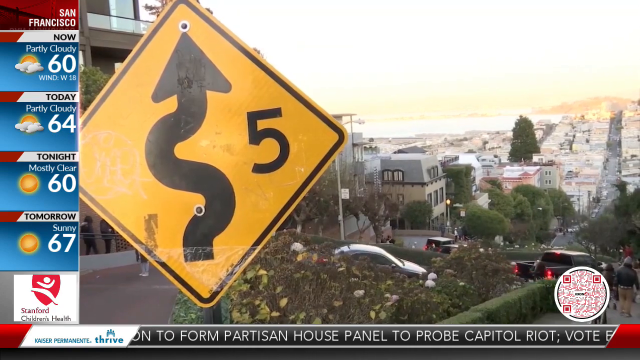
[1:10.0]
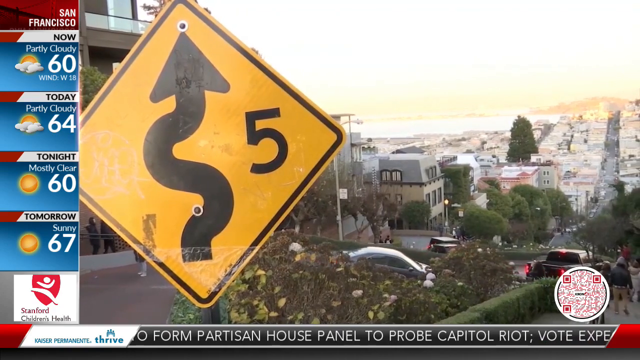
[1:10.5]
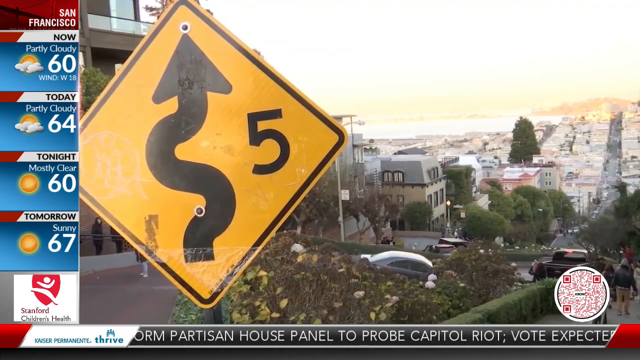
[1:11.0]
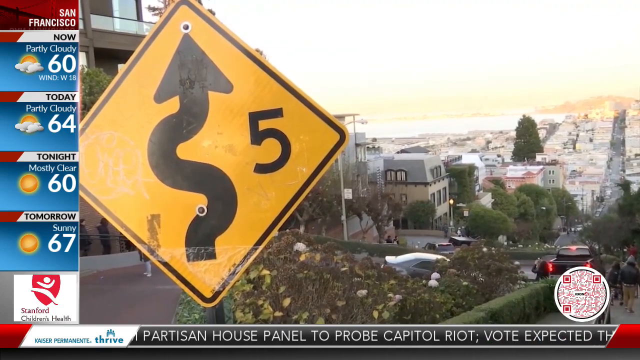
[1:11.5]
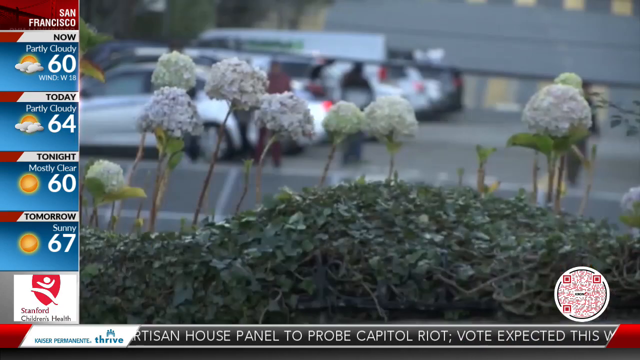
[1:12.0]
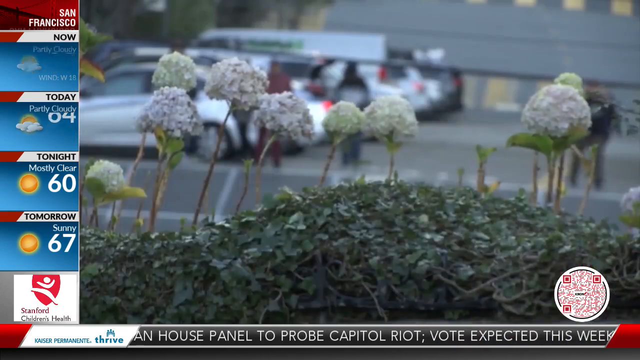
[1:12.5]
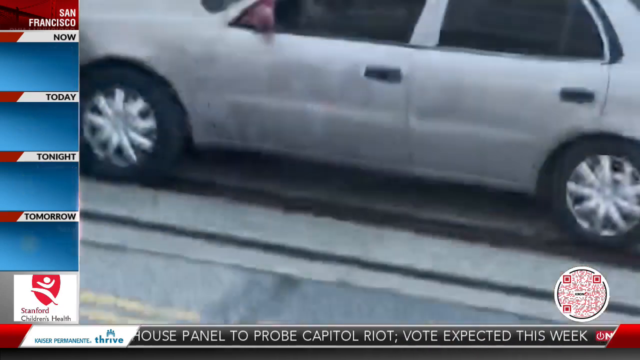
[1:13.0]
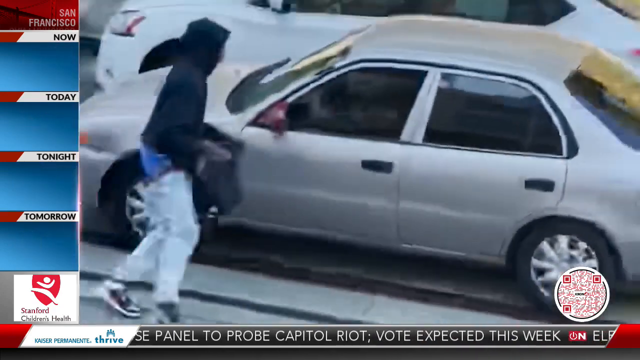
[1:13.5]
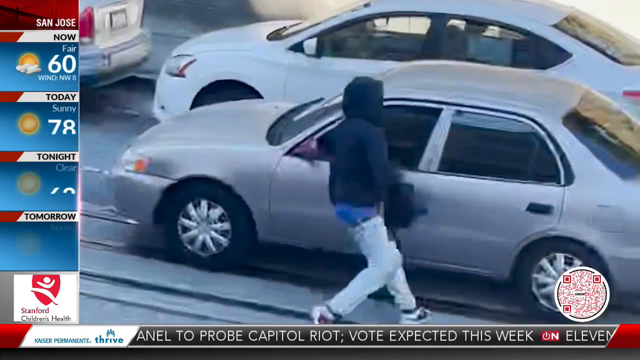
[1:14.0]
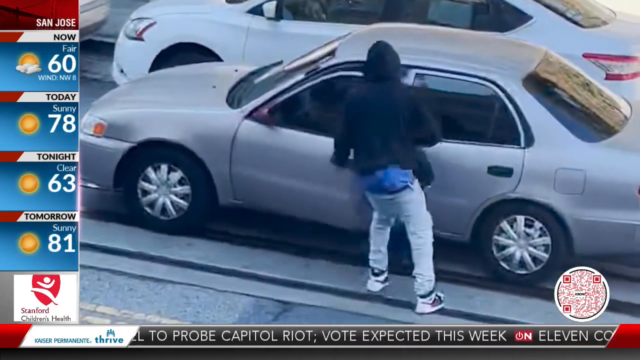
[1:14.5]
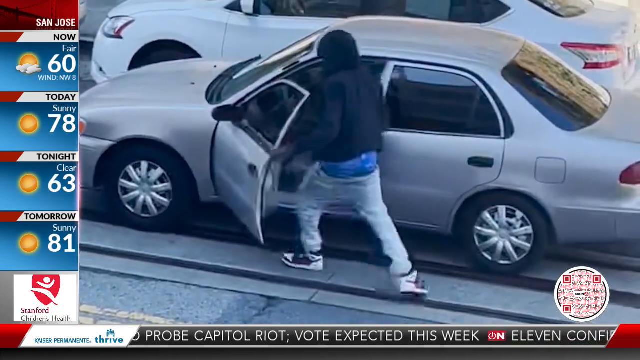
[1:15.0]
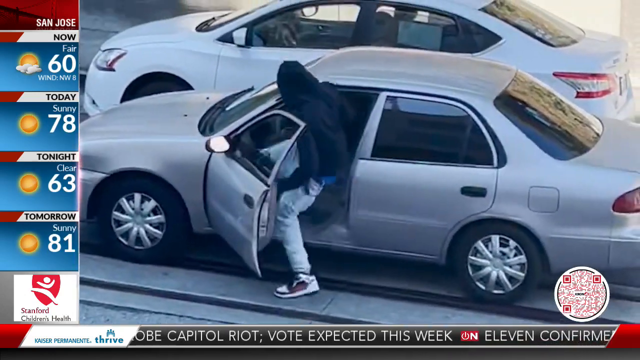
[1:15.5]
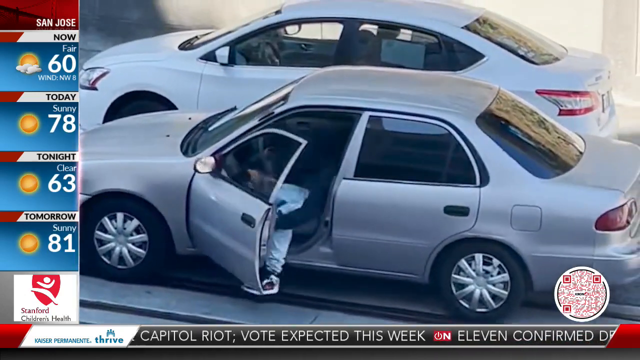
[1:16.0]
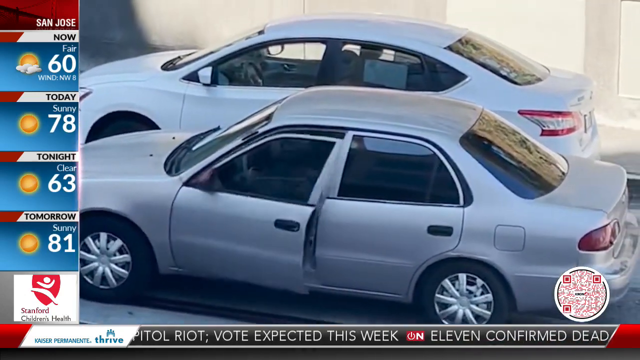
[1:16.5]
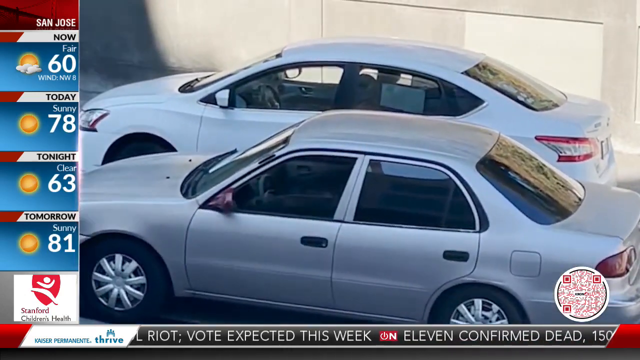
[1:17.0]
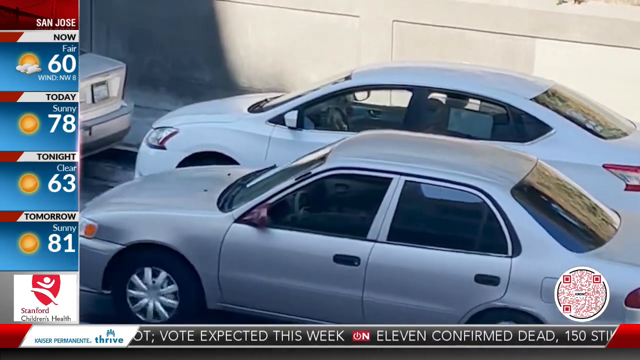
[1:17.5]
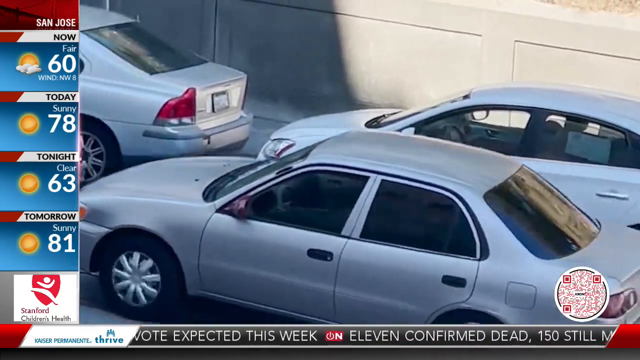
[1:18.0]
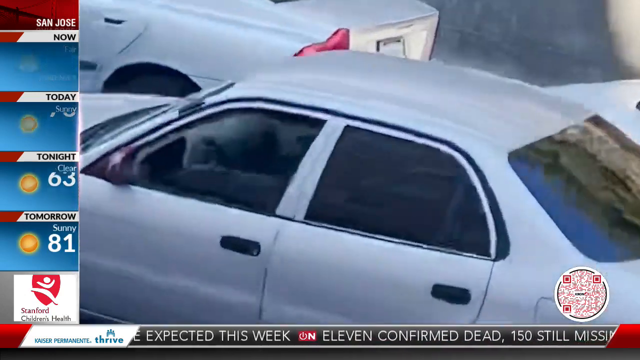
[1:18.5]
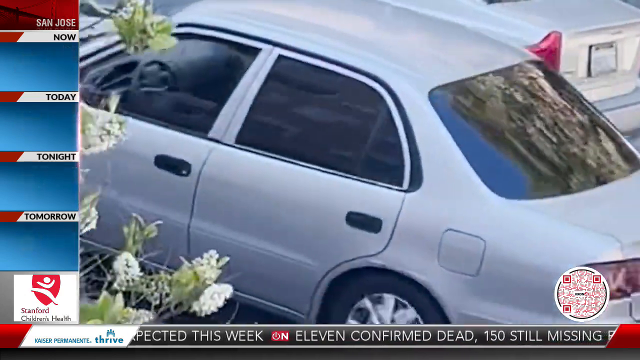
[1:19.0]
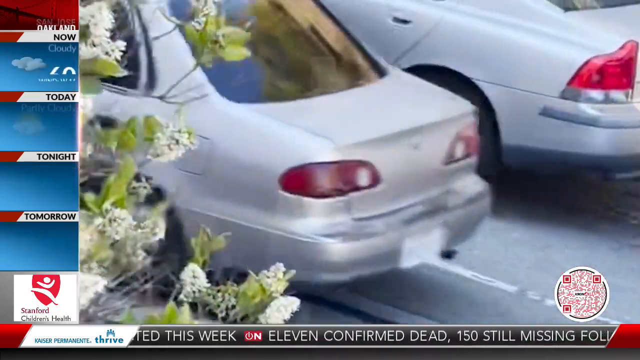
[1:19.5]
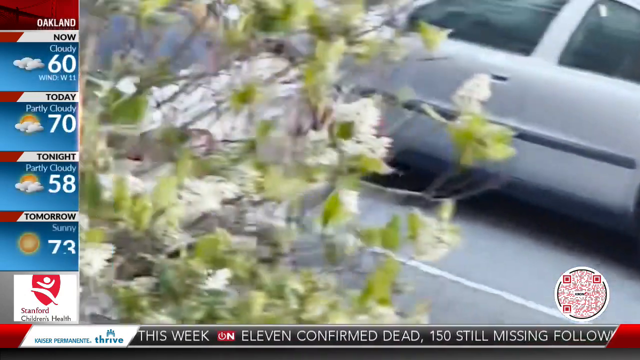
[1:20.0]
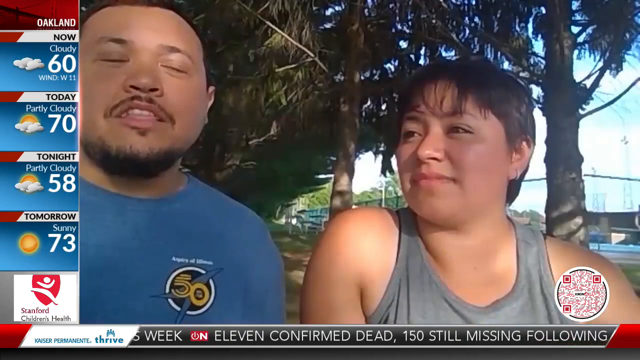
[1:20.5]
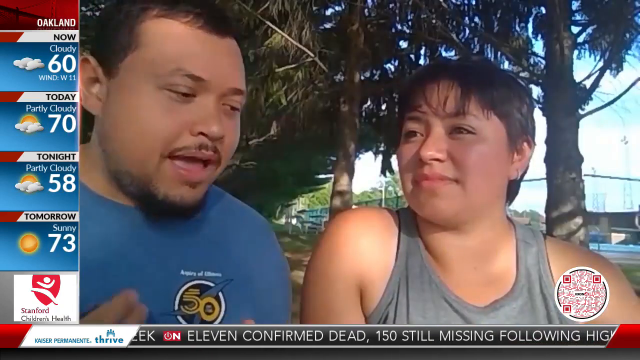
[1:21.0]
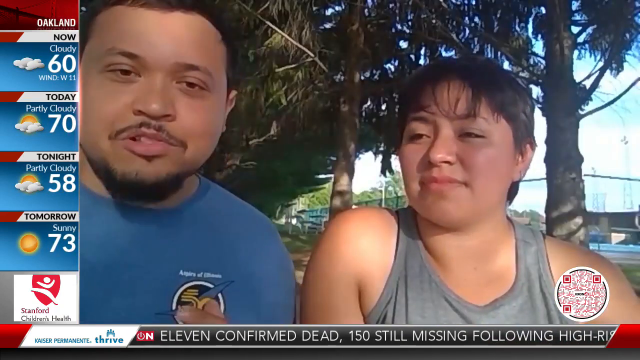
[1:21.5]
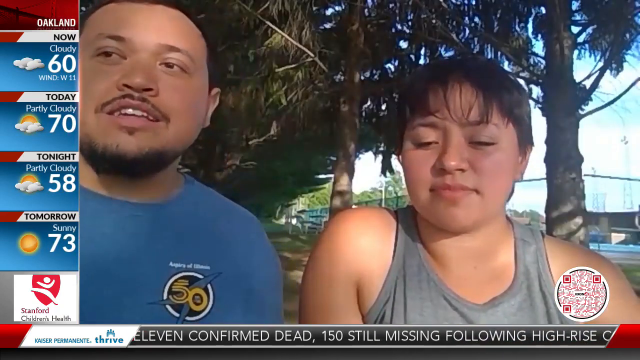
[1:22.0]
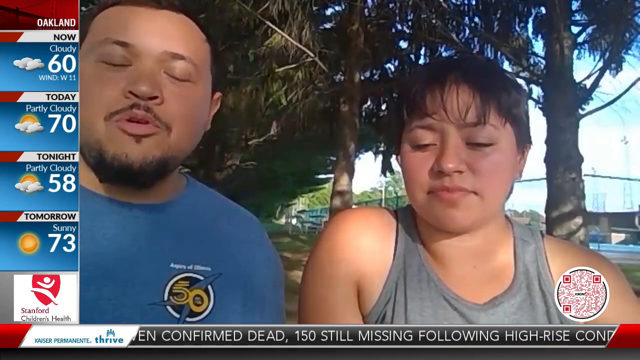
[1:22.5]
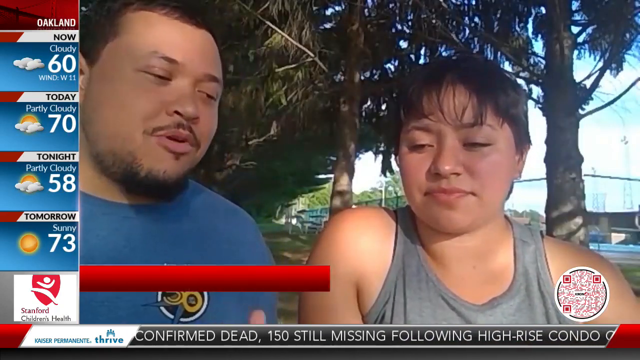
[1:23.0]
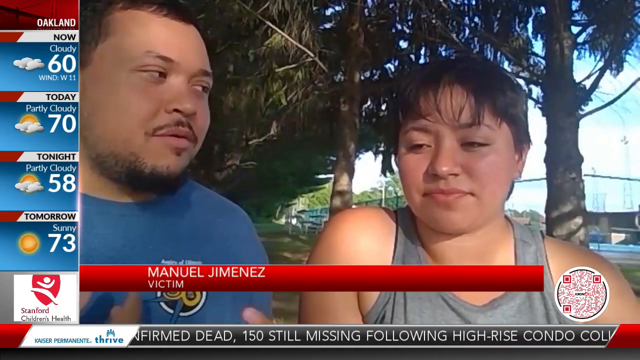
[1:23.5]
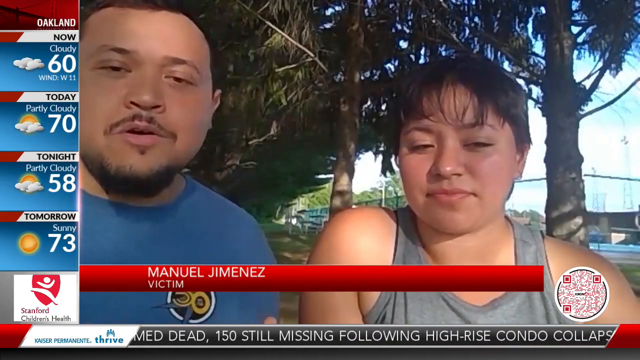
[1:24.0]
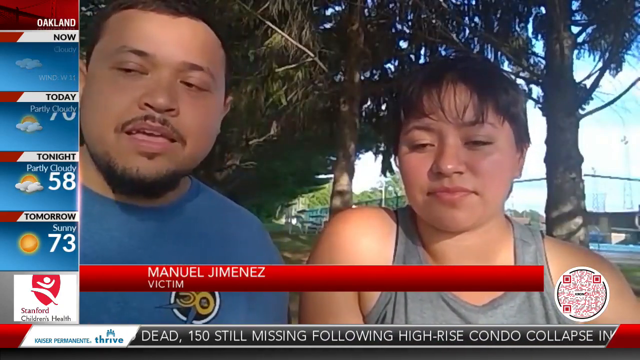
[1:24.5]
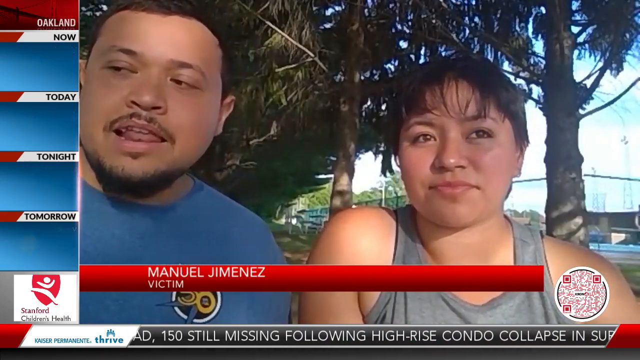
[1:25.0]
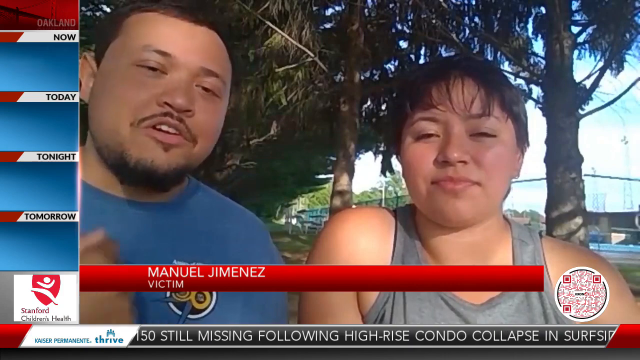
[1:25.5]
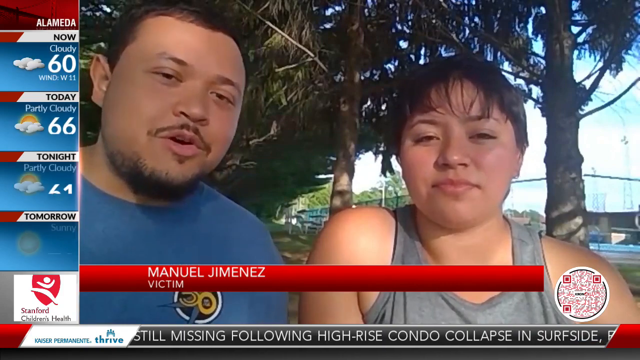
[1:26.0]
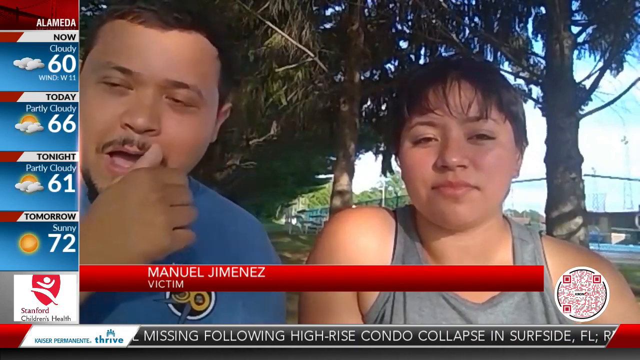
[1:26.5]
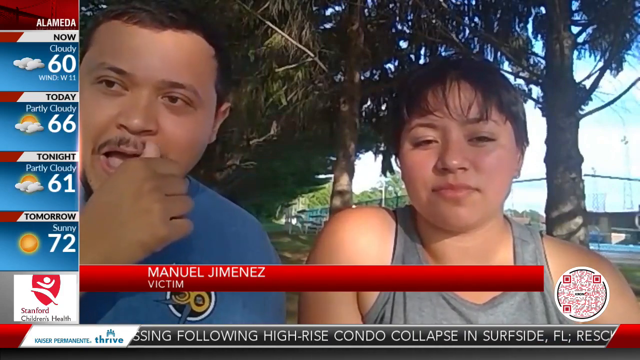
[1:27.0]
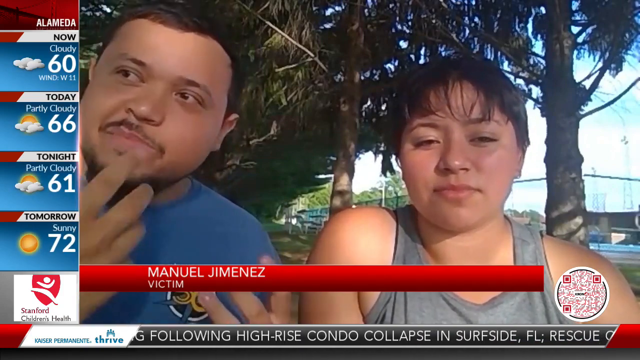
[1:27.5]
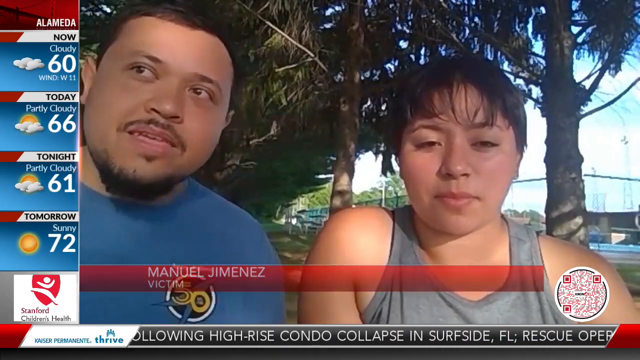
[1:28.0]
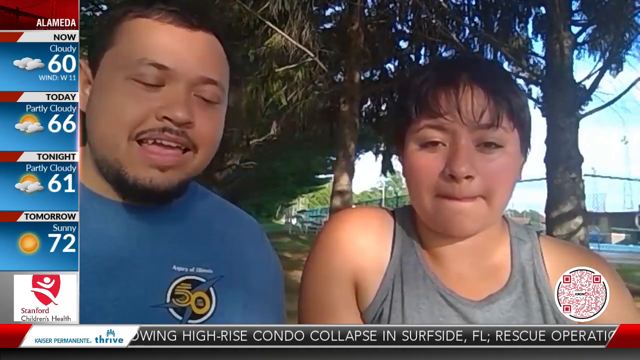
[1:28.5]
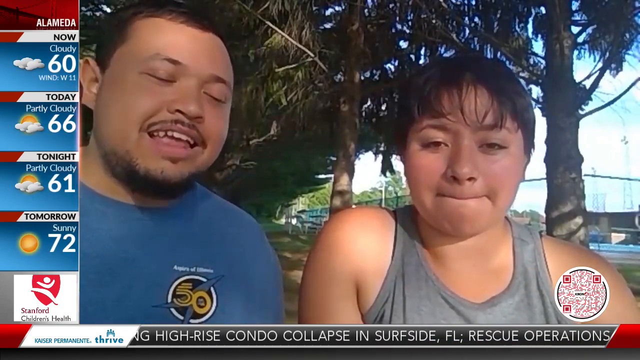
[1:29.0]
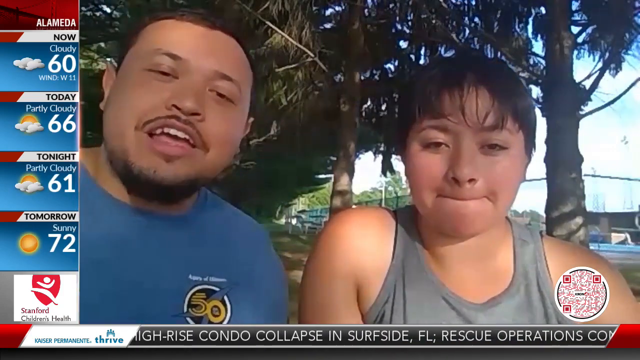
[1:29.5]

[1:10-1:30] A still shot shows a man who appears to be carjacking a vehicle, a light gray four-door sedan. He wears a dark blue hoodie, light blue jeans that have come down past his hips, and tennis shoes. He opens the driver's side door. There are flowers in the shot with the car. News scrolls along the very bottom of the screen. He then drives off with the car, and the shot returns to the victims, who sit outside talking to the camera with trees behind them. On the left-hand side, the station continues showing weather conditions for Alameda, San Jose and Oakland. At the very bottom of the weather forecast is a red and white logo for Stanford Children's Health.